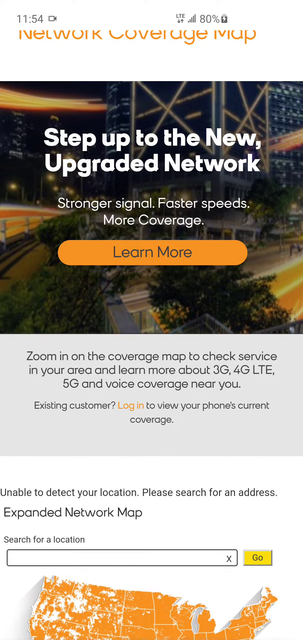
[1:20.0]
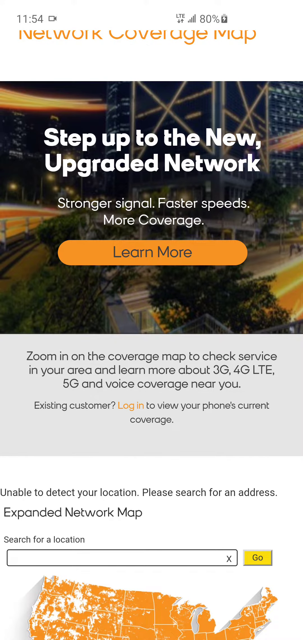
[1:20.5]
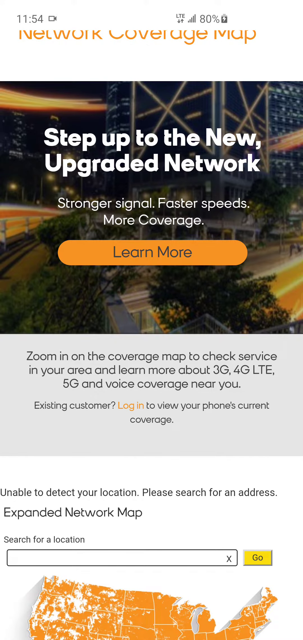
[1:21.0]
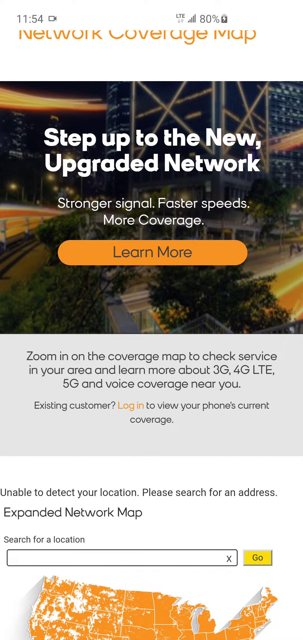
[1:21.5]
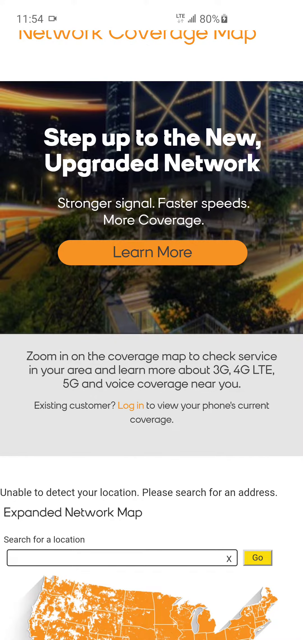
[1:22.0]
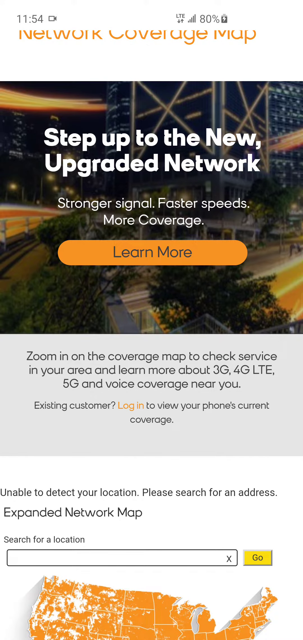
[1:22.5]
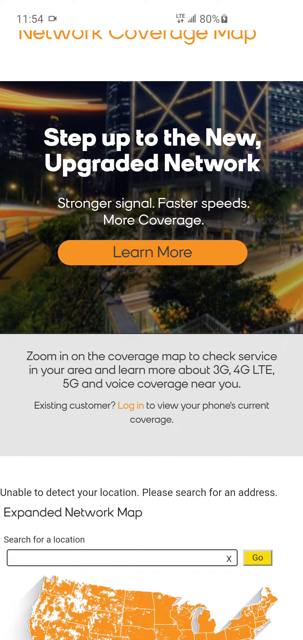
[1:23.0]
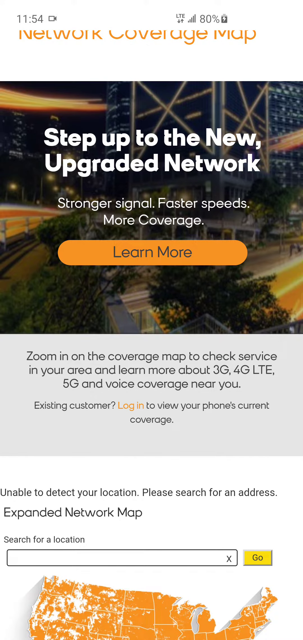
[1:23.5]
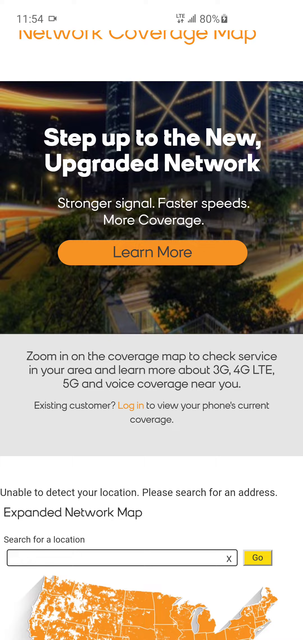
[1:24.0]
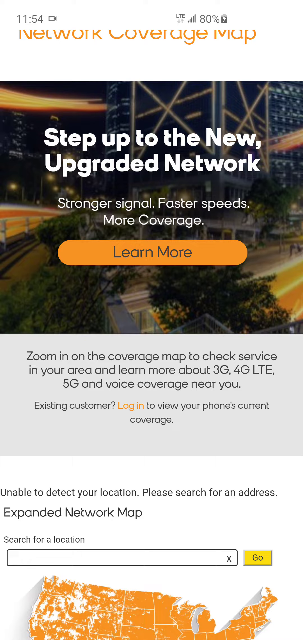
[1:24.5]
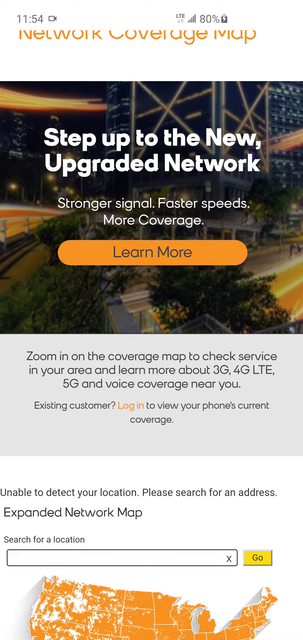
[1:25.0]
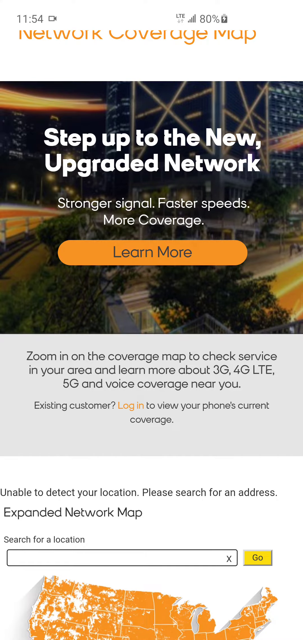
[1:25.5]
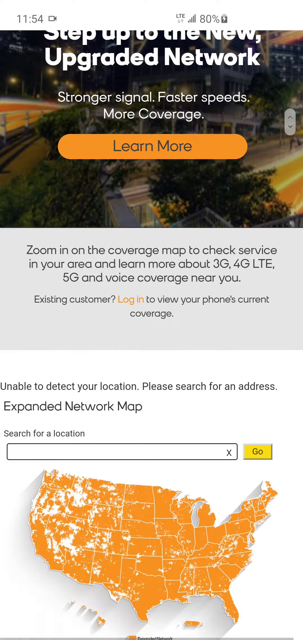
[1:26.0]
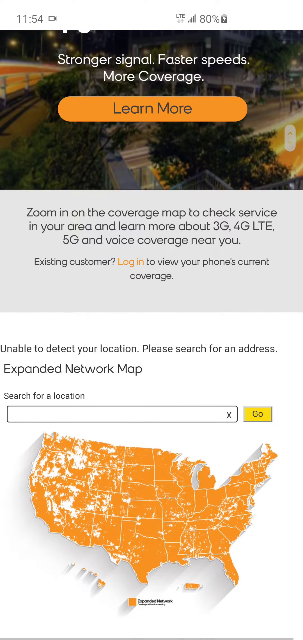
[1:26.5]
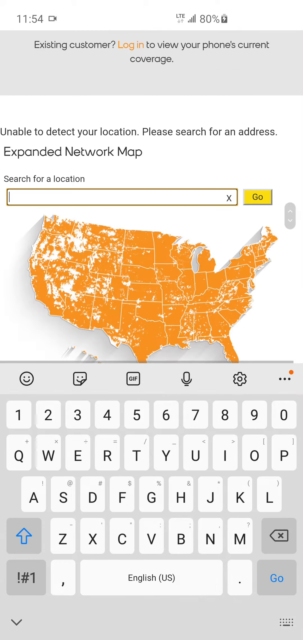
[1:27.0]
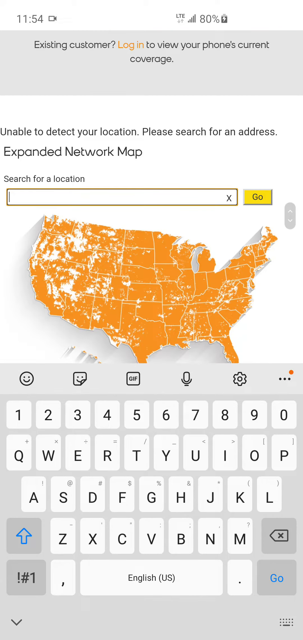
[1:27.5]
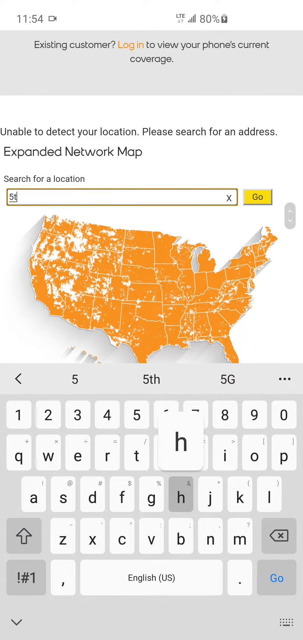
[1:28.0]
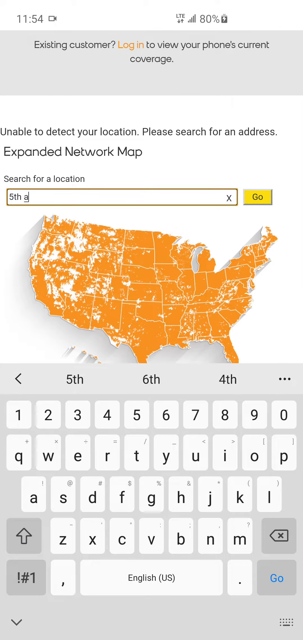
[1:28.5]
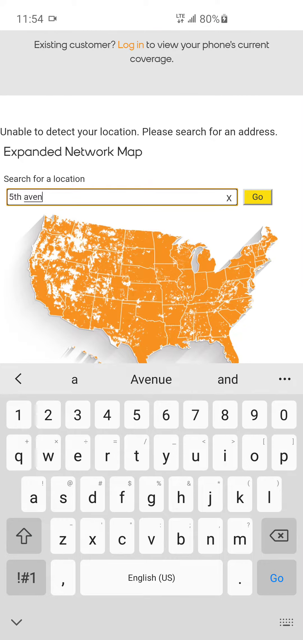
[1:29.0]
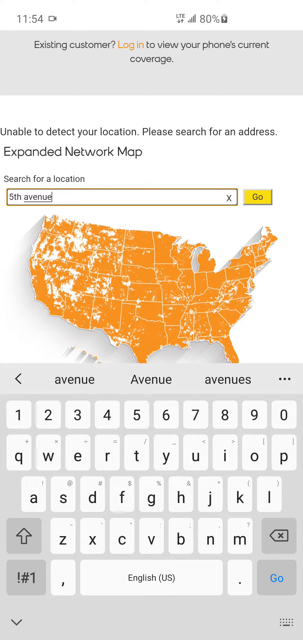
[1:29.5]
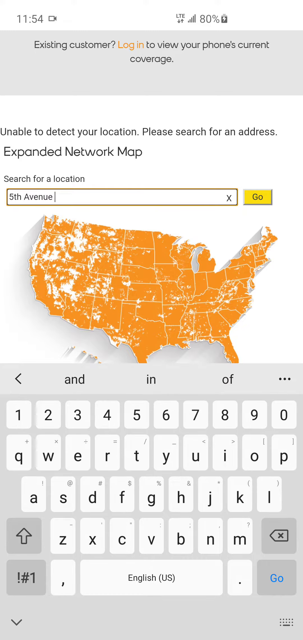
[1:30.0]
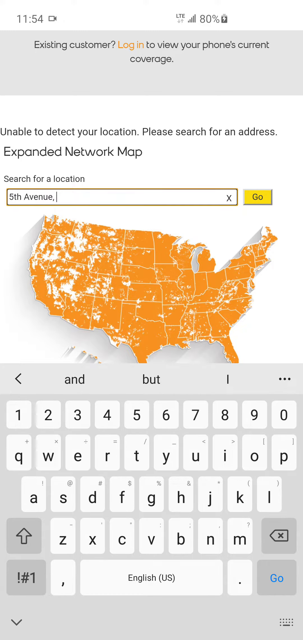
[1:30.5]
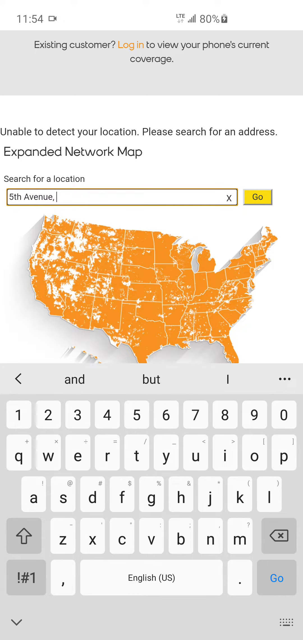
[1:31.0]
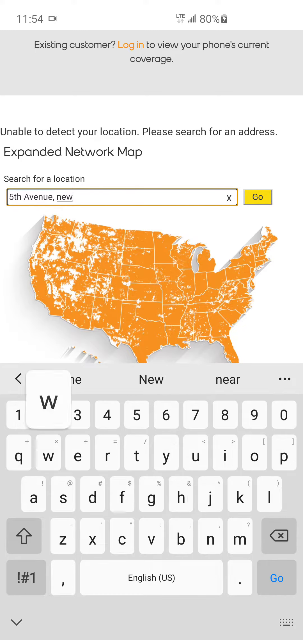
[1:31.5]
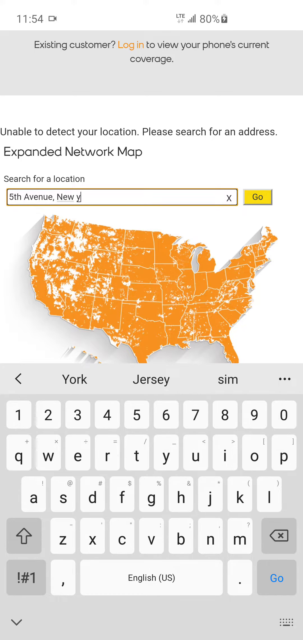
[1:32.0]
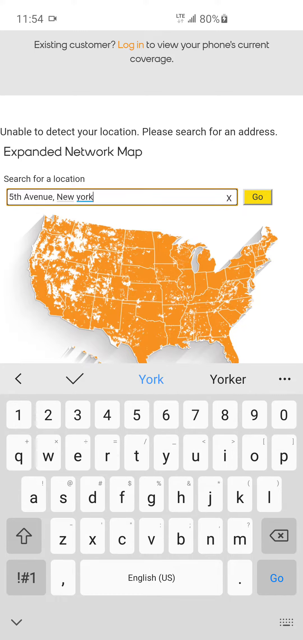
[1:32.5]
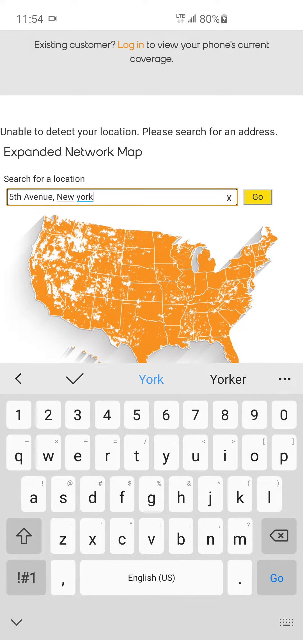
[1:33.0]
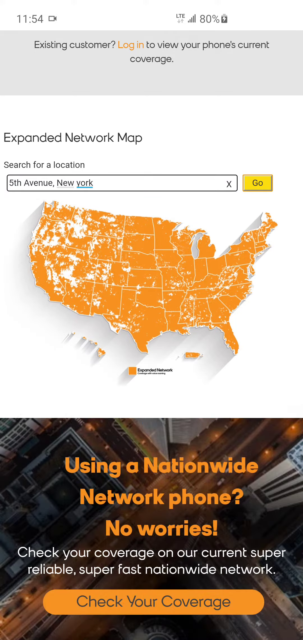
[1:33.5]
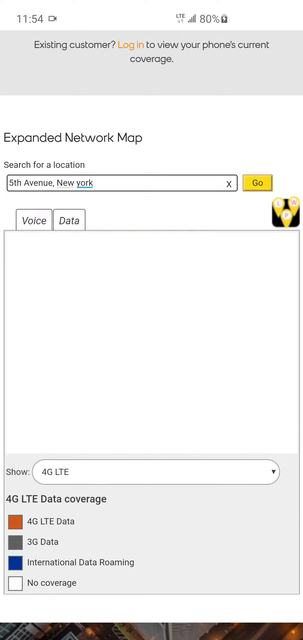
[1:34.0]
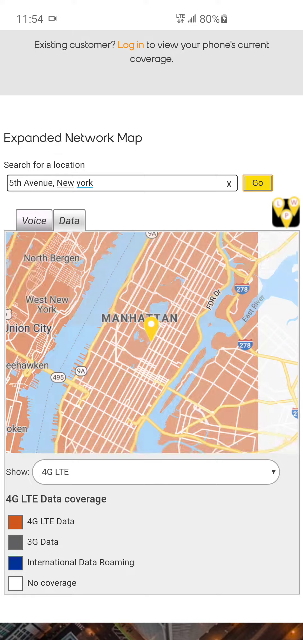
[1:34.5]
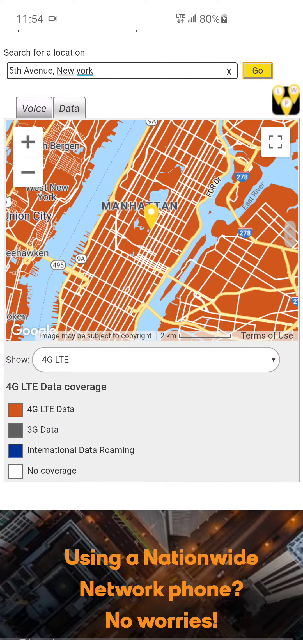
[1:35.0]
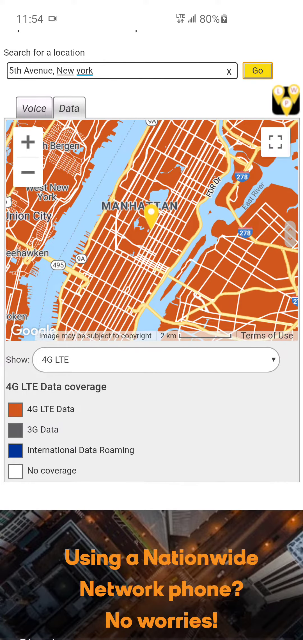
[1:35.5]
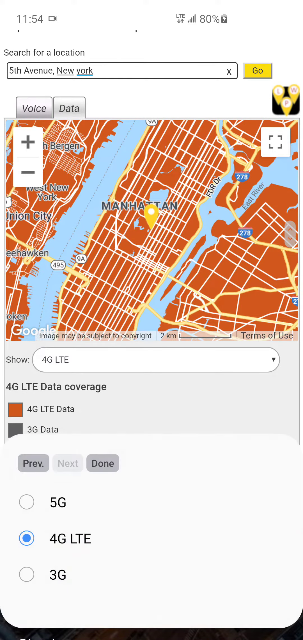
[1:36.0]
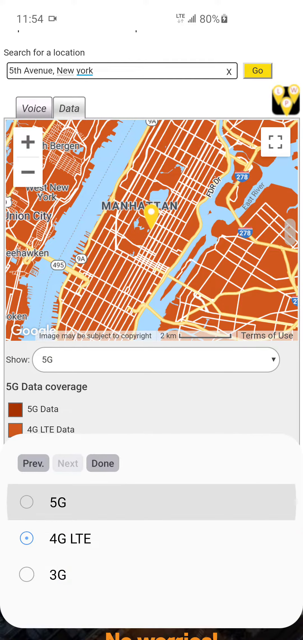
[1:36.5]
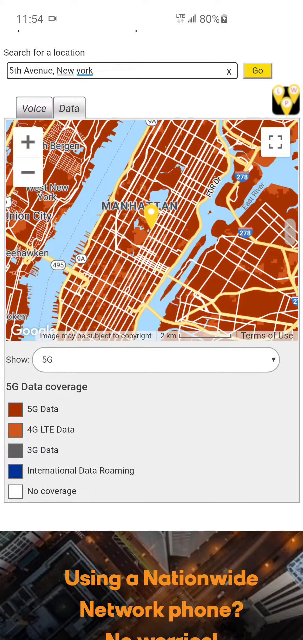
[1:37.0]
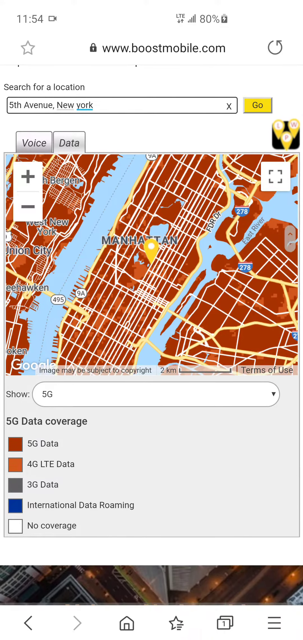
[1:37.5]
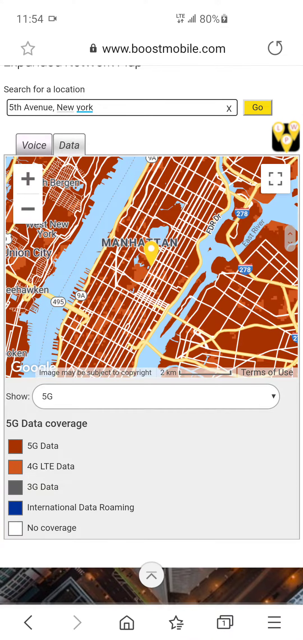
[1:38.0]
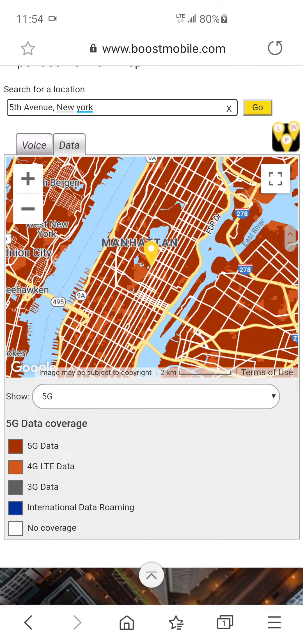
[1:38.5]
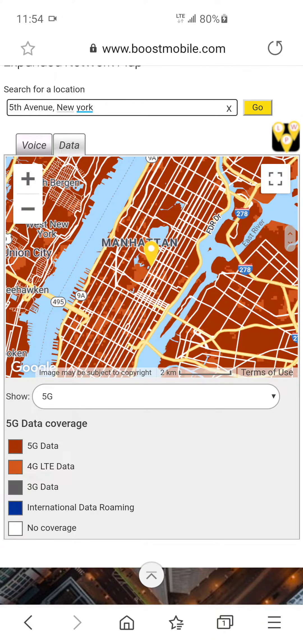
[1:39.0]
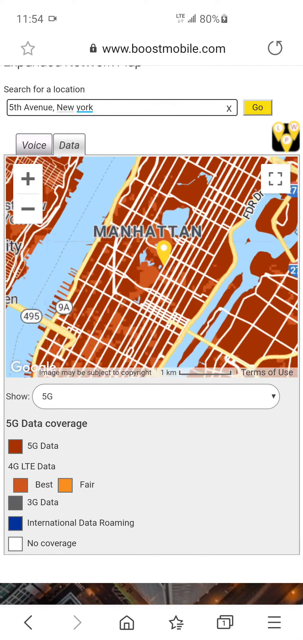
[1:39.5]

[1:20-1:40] The user is still on the Boost Mobile website, looking at an advertisement that reads "step up to the new upgraded network. Stronger signal, faster speeds, more coverage," with an orange "learn more" button. Underneath, in black text on a gray background, it reads "zoom in on the coverage map to check service in your area and learn more about 3G, 4G, LTE, 5G, and voice coverage near you. Existing customer, log in to view your phone's current coverage." Further text reads "unable to detect your location, please search for an address" and "Expanded network map". The user appears to scroll to a map of the United States showing all the coverage, then enters a specific address in New York; it looks like 5th Avenue in New York City, New York is typed in and pulled up on the map.